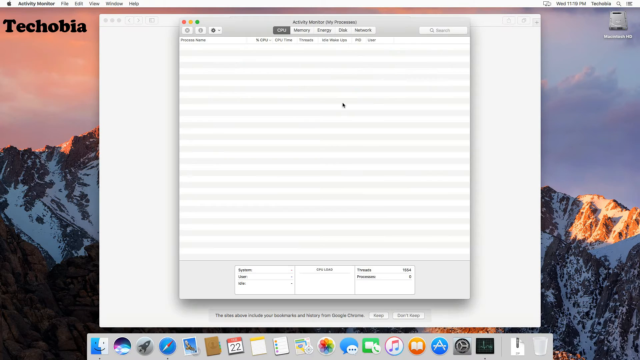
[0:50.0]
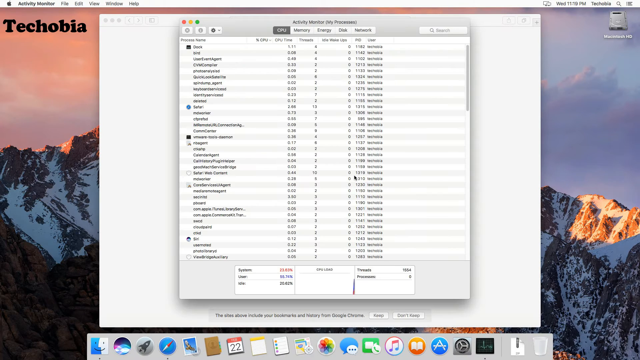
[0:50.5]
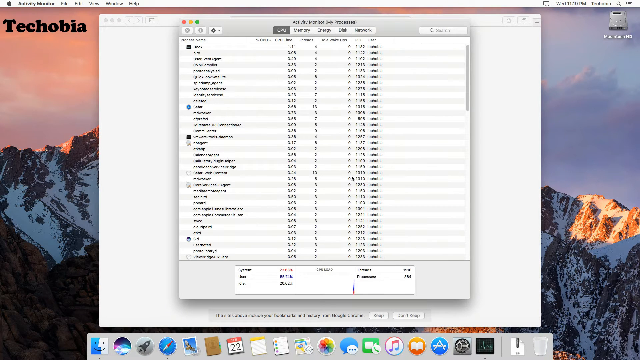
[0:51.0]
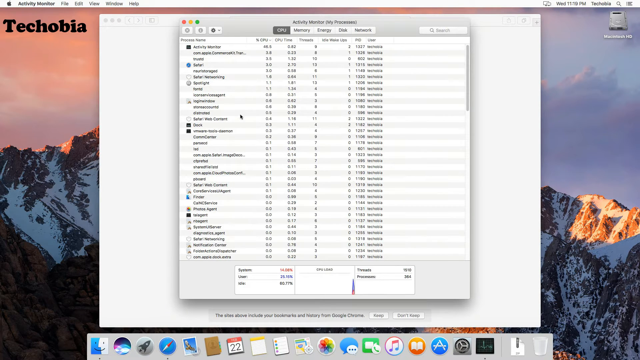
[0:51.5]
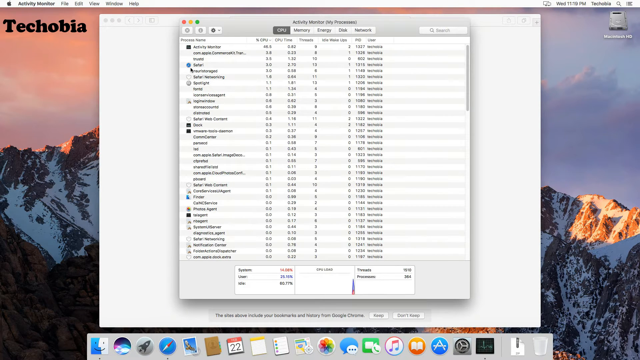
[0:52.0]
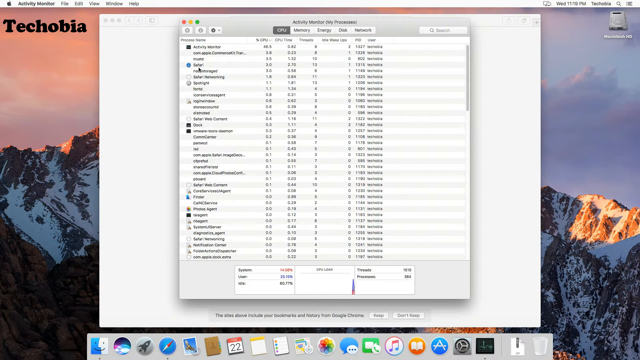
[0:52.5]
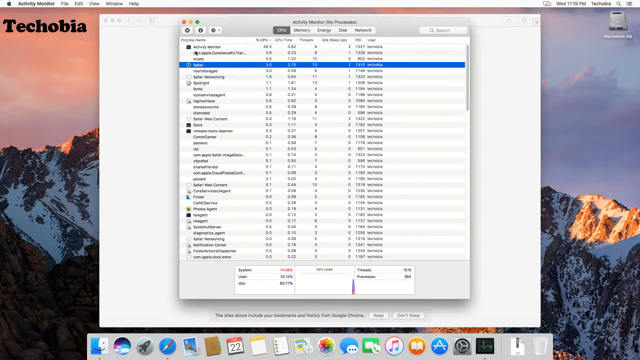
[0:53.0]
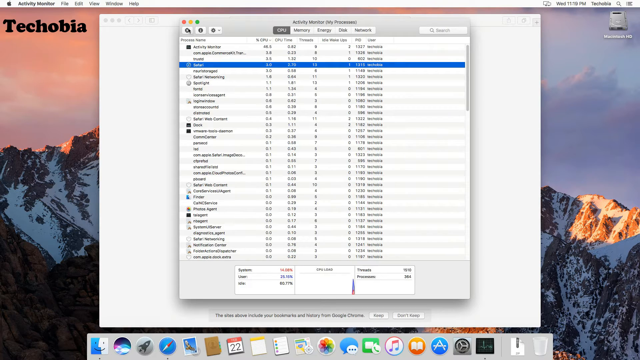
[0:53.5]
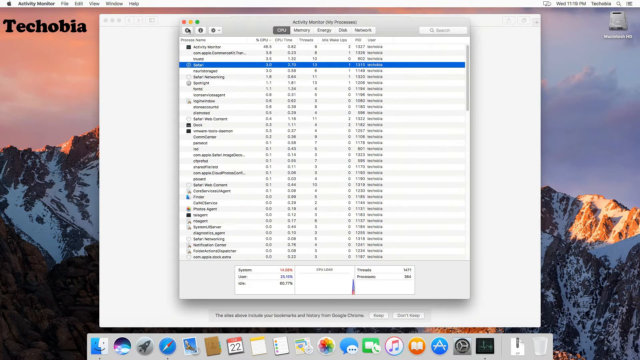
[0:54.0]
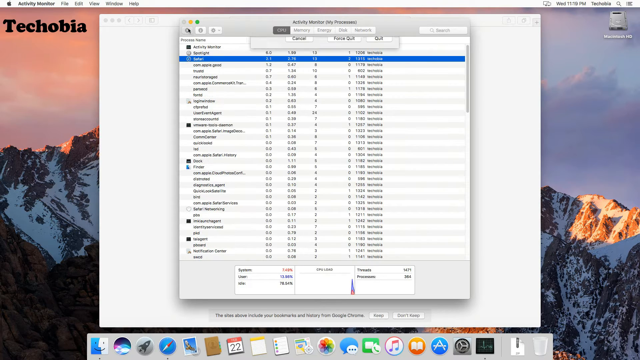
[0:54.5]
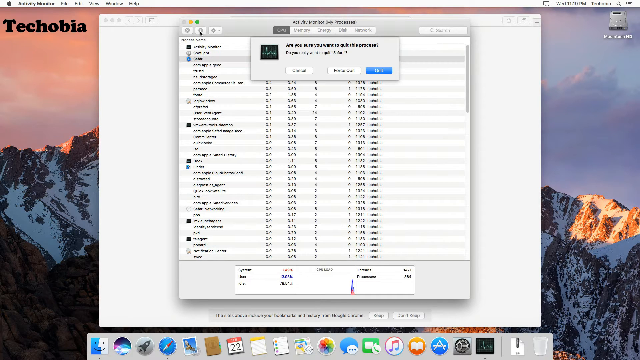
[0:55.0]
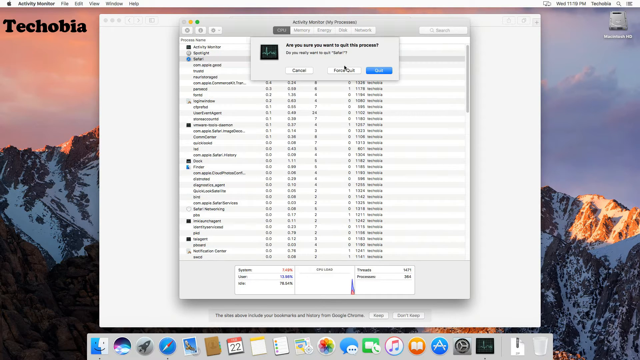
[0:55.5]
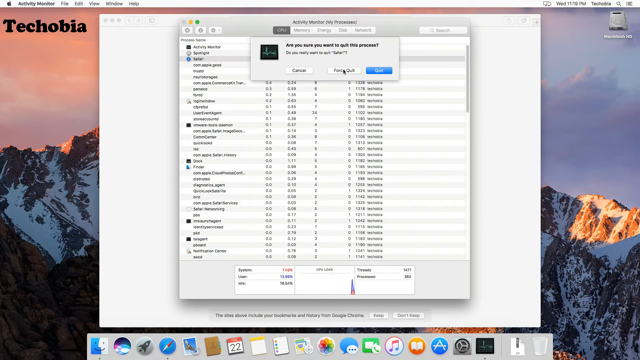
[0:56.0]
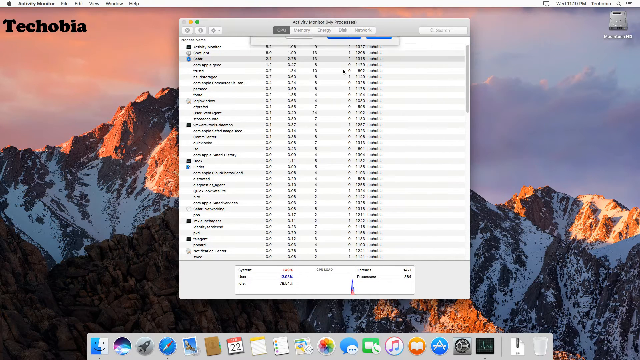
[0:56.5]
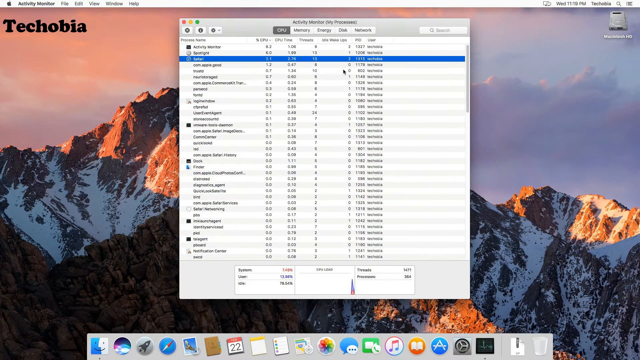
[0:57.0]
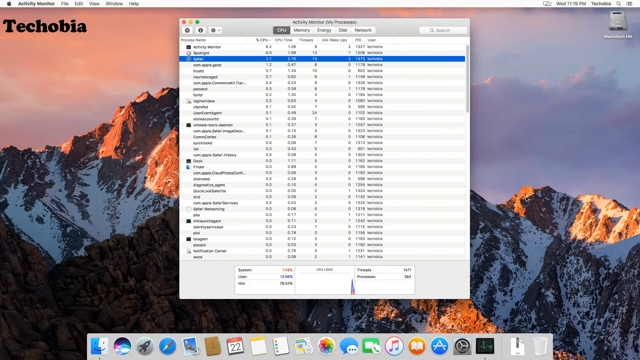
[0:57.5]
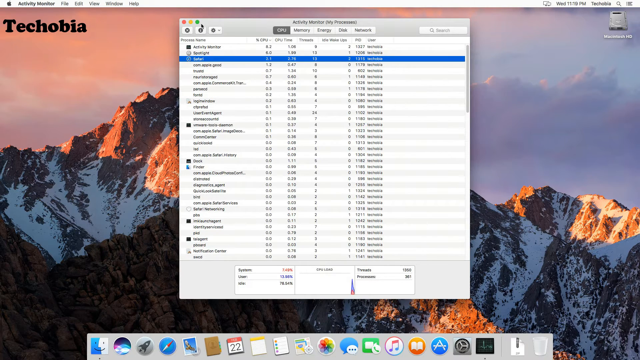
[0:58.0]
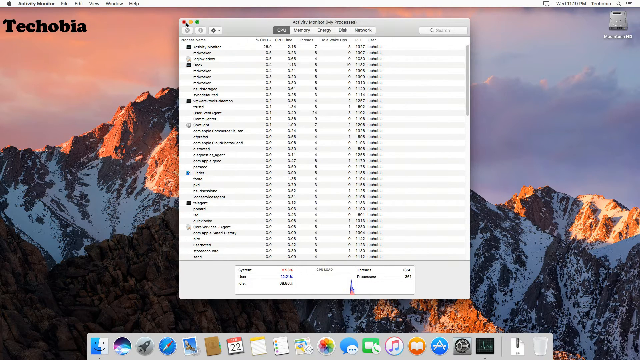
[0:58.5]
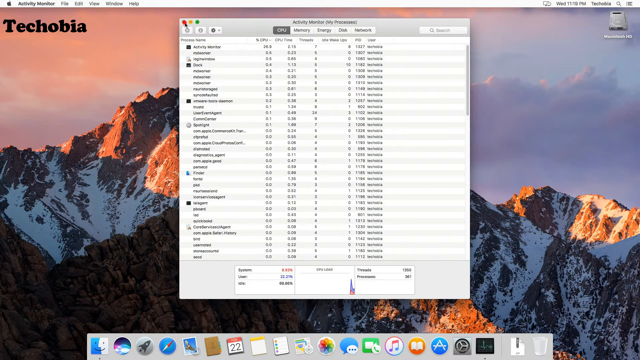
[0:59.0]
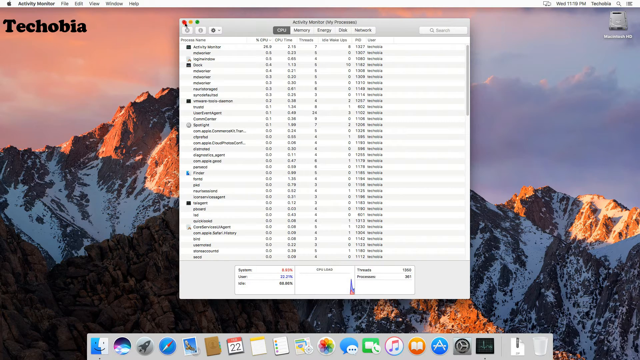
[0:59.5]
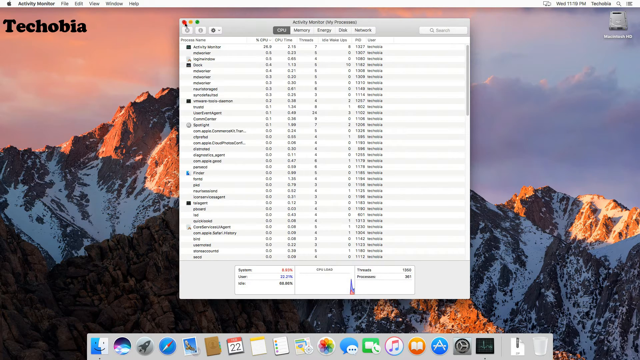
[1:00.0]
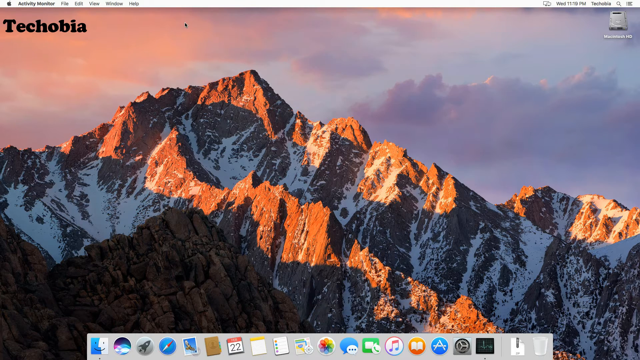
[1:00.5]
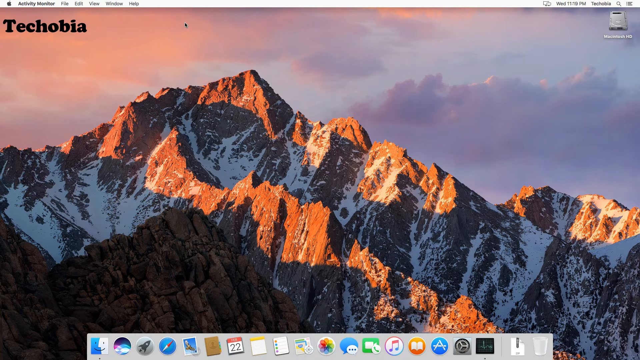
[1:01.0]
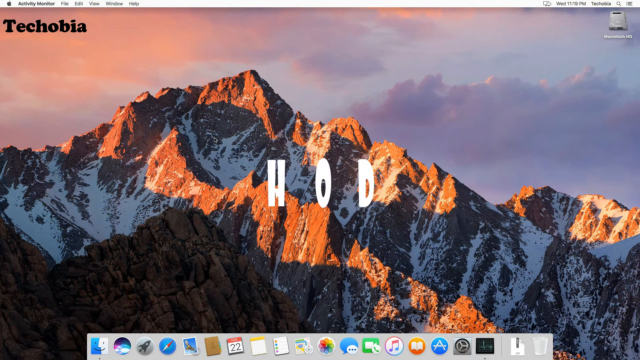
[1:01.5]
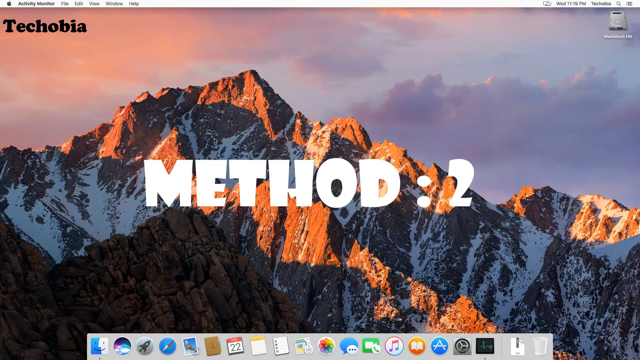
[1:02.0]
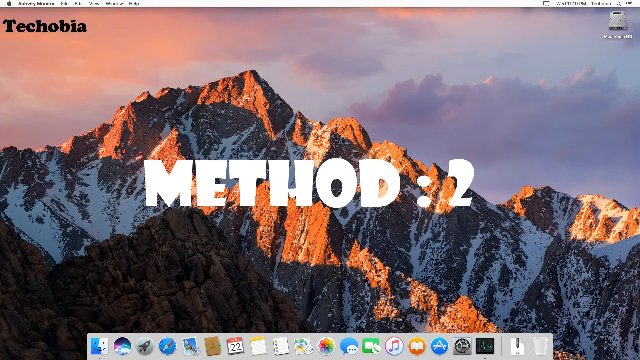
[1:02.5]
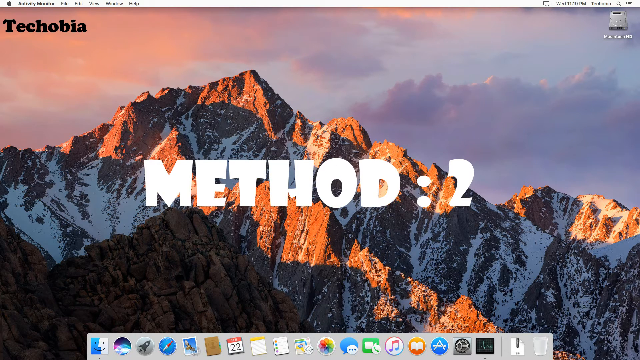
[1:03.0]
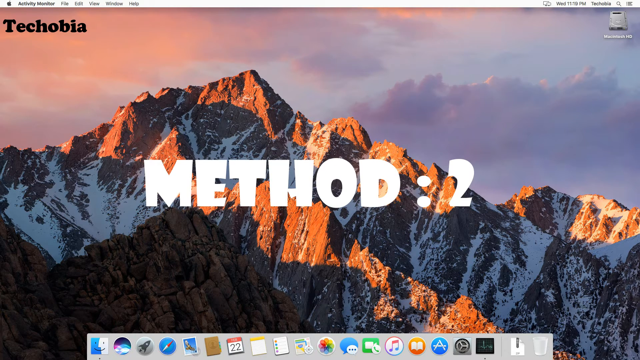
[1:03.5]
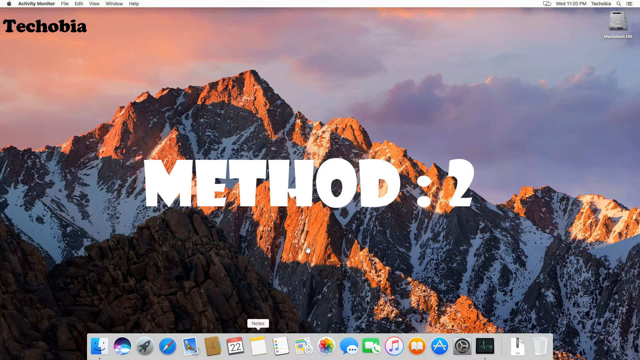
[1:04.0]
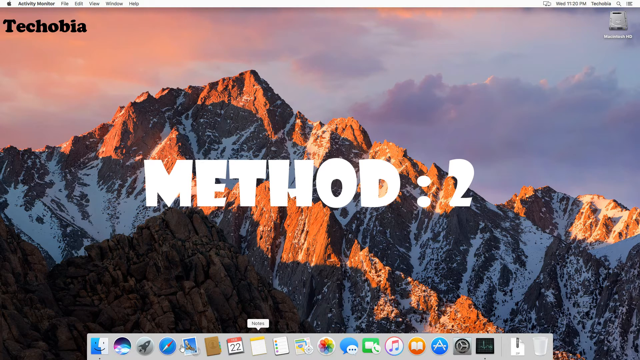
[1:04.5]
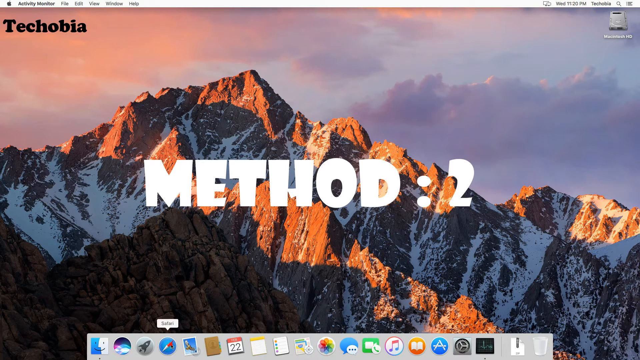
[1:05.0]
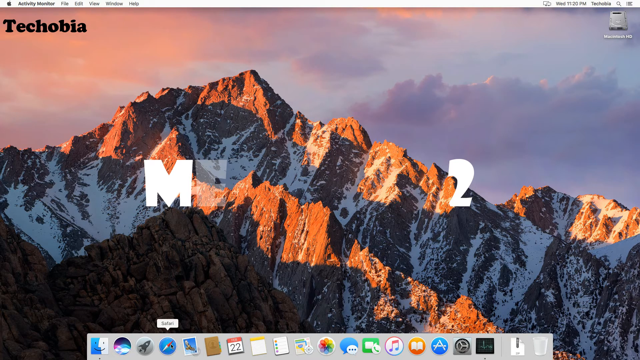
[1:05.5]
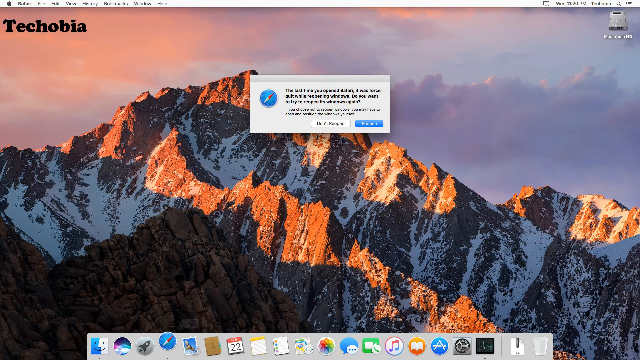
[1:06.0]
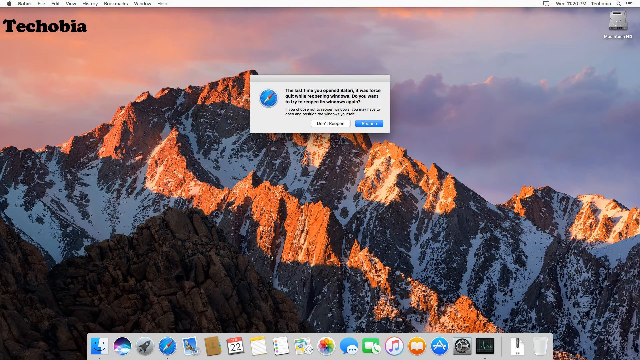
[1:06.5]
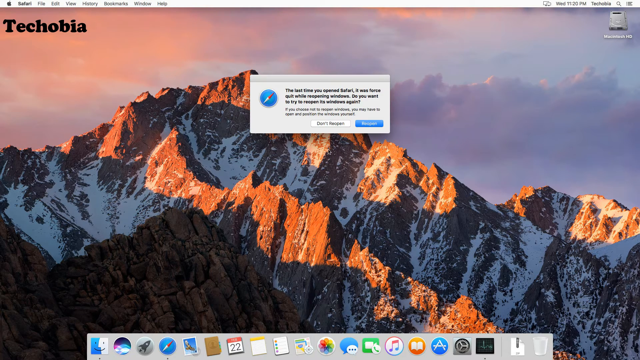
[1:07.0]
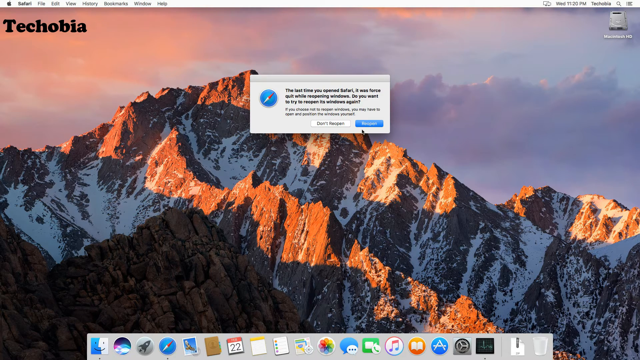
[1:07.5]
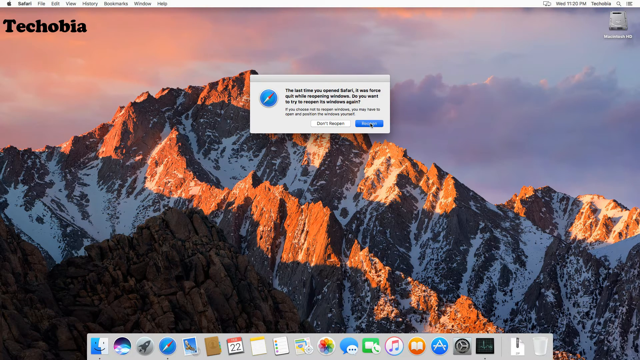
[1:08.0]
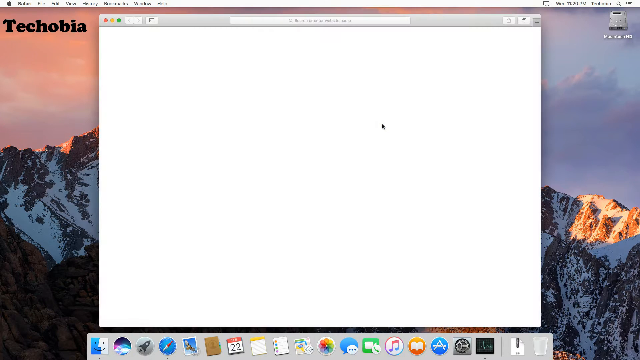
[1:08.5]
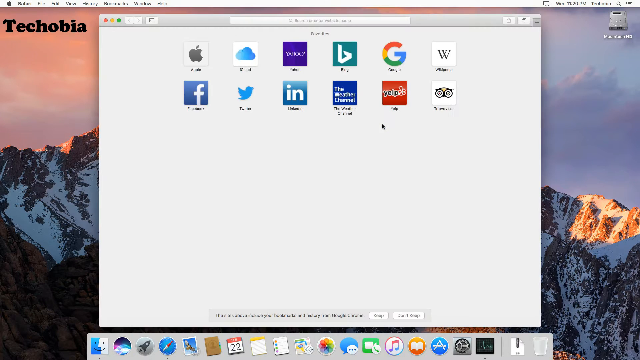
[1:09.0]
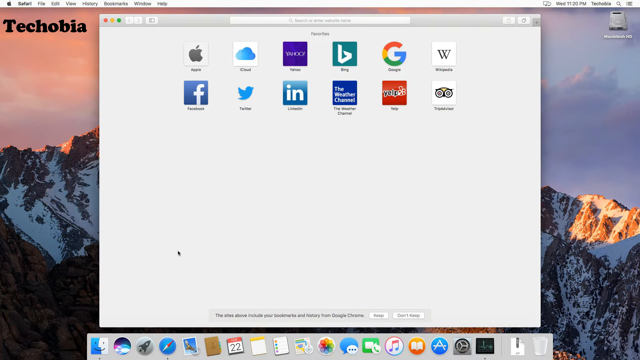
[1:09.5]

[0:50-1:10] What appears to be an activity monitor menu pops up, most likely listing a bunch of programs that are visible or being used and showing their usage and how much memory is taken up. He clicks on something, which becomes highlighted; what it is cannot be made out, but it has a blue logo next to it. He then goes back to the red button in the top left-hand corner of the menu and clicks something, which brings up a menu that says "cancel," "quit," or "force quit," and he selects force quit. He goes back to the red button and the menu disappears. The words "method: 2" then show up, and he goes to the bottom of the screen and clicks the same thing he clicked the first time; the bubble looks like it says "Safari." He clicks on Safari, and a message box appears asking him whether he wants to reopen Safari with the previous windows open or report a problem. Then a menu pops up with Google, Yelp, Bing, Weather Channel, LinkedIn, Twitter, Facebook, Apple, iCloud, Wikipedia, and TripAdvisor.